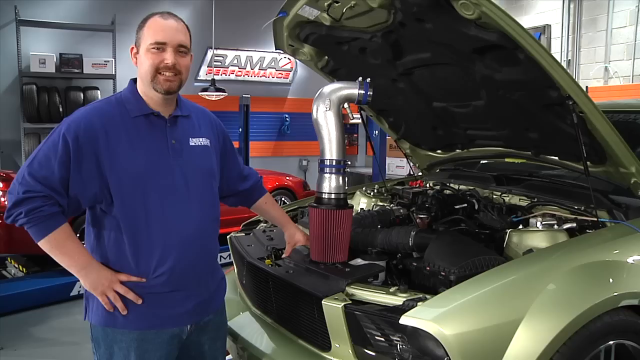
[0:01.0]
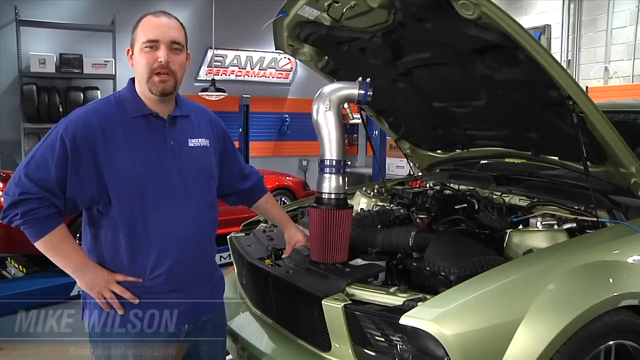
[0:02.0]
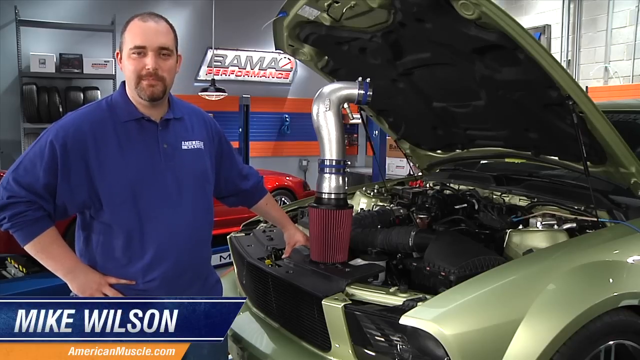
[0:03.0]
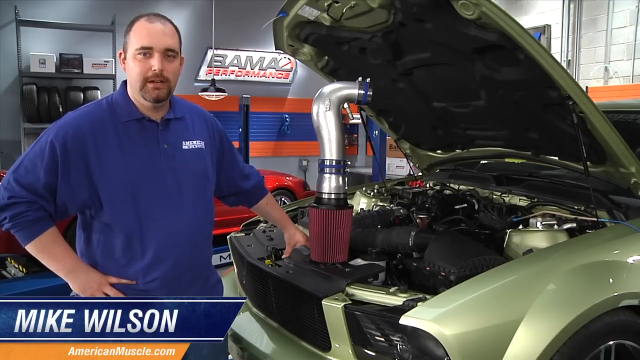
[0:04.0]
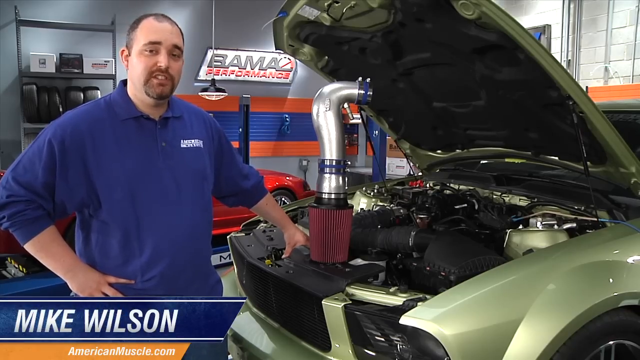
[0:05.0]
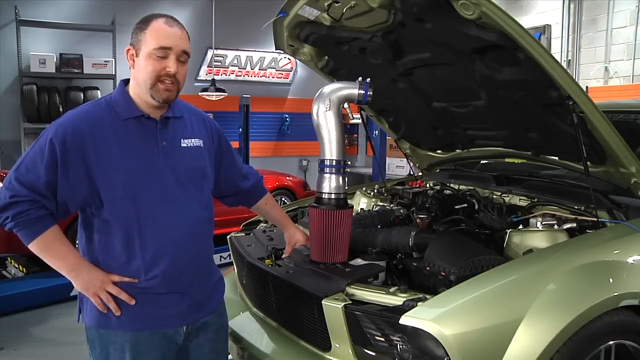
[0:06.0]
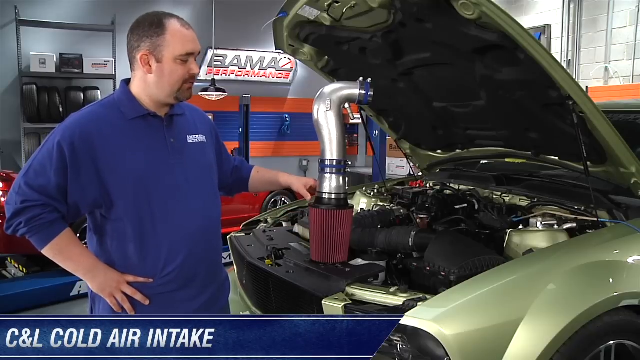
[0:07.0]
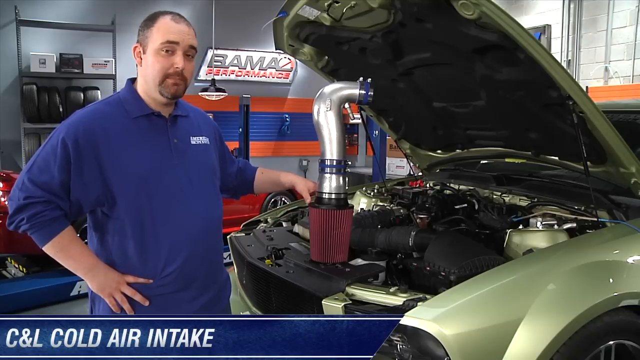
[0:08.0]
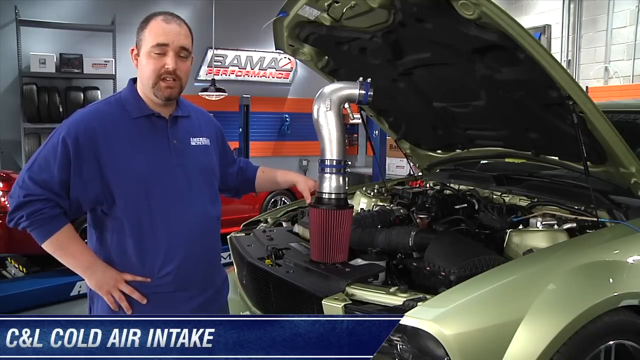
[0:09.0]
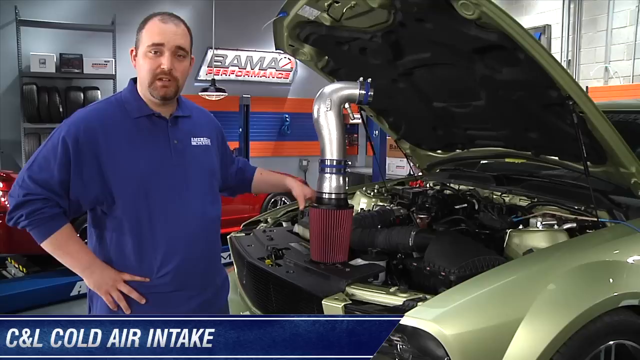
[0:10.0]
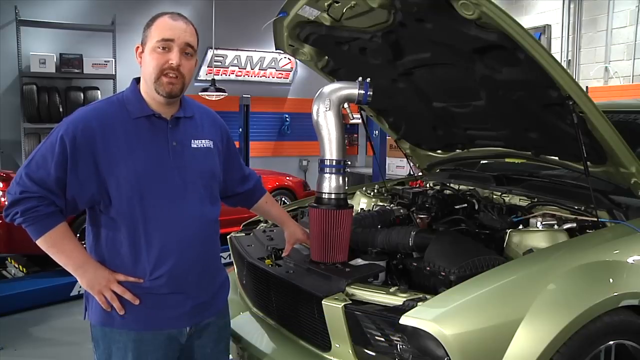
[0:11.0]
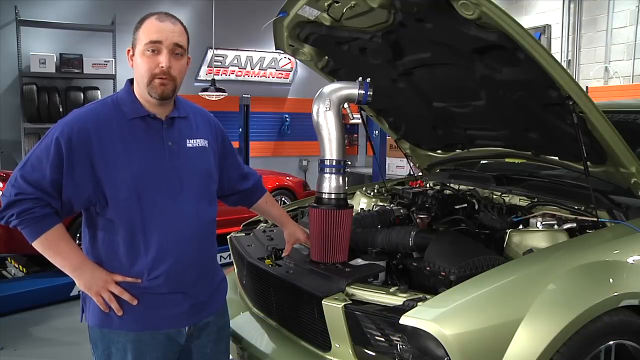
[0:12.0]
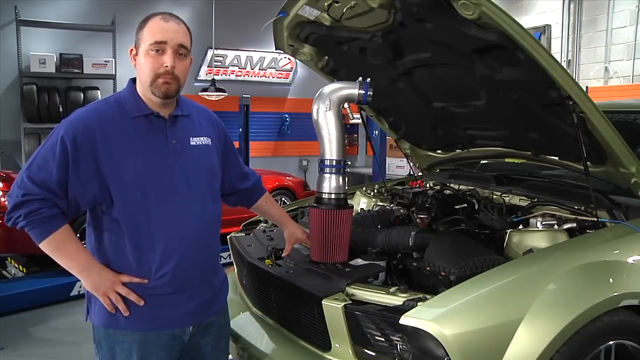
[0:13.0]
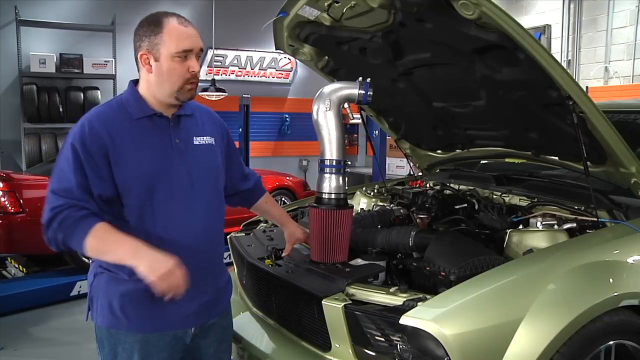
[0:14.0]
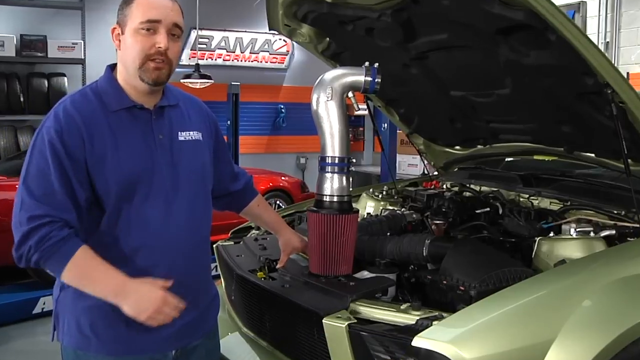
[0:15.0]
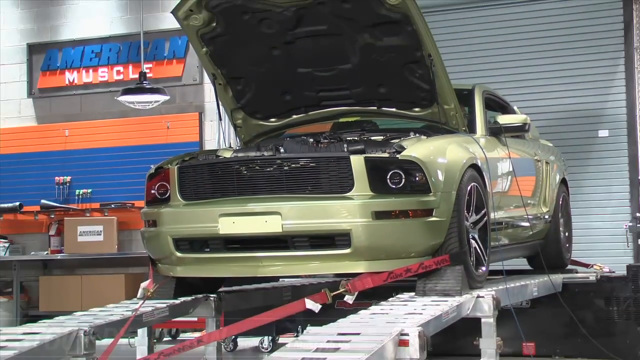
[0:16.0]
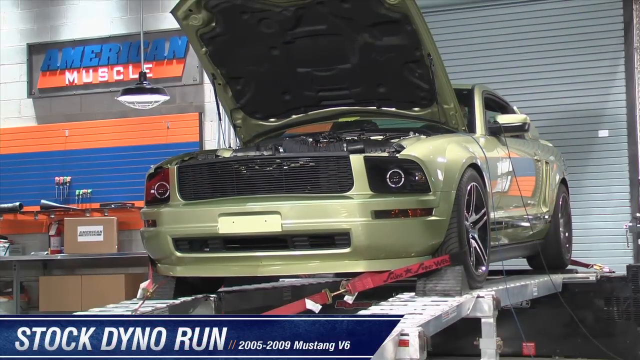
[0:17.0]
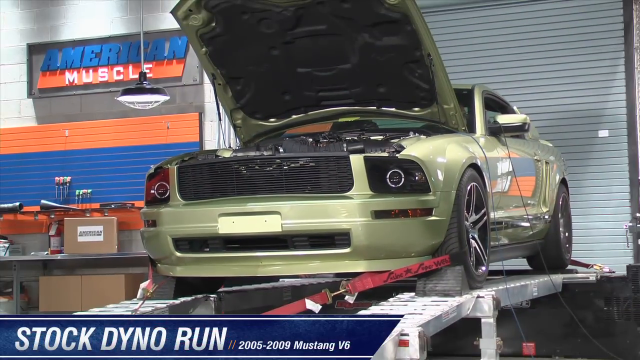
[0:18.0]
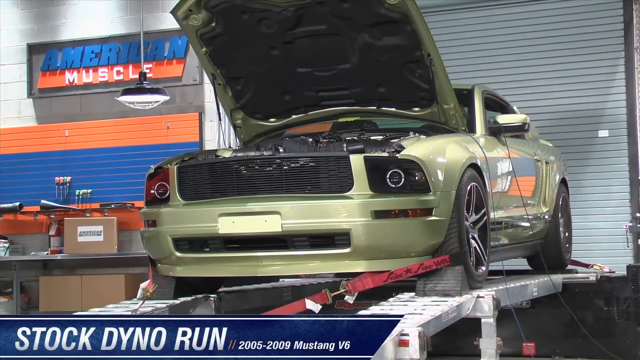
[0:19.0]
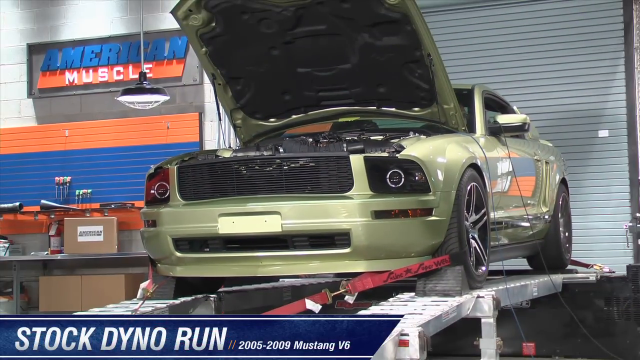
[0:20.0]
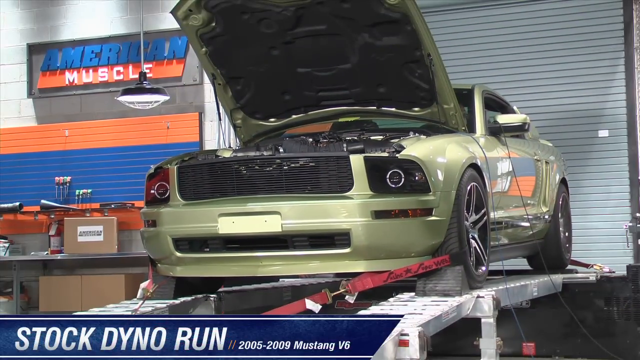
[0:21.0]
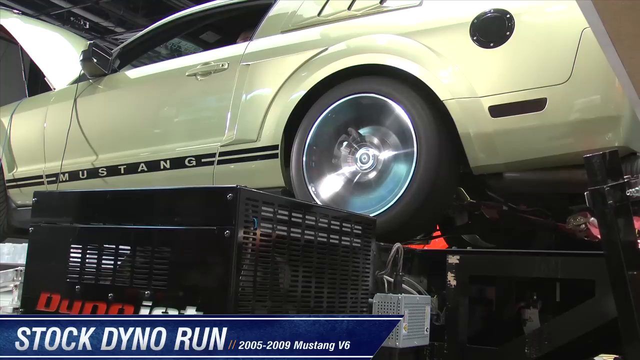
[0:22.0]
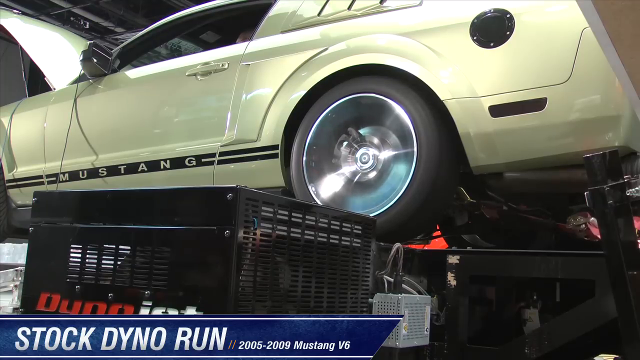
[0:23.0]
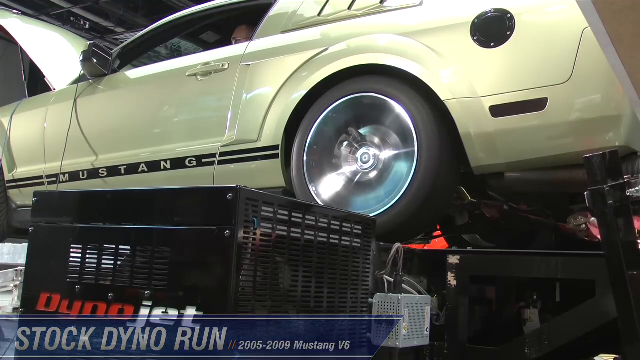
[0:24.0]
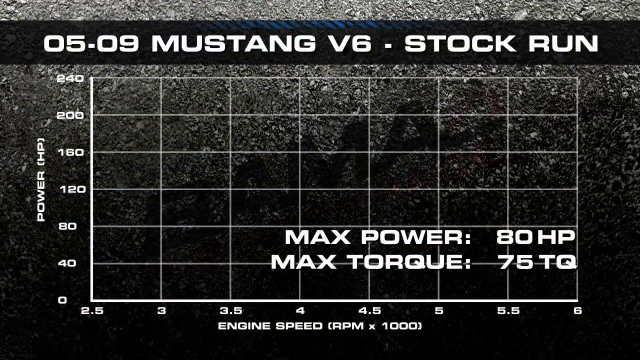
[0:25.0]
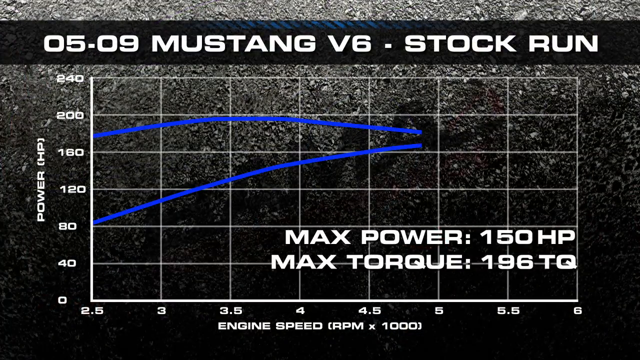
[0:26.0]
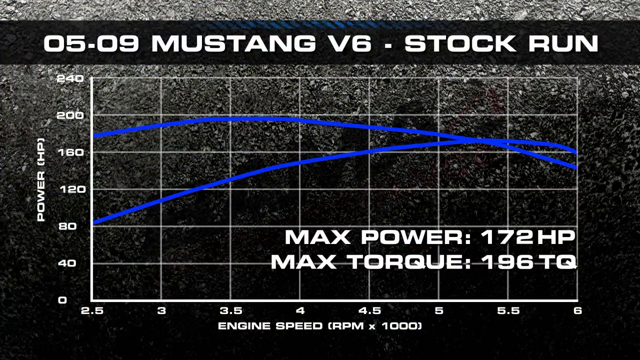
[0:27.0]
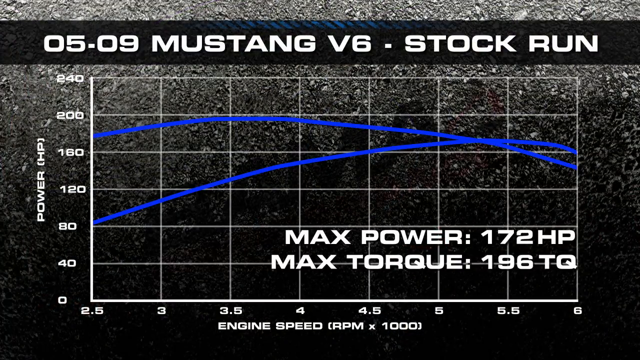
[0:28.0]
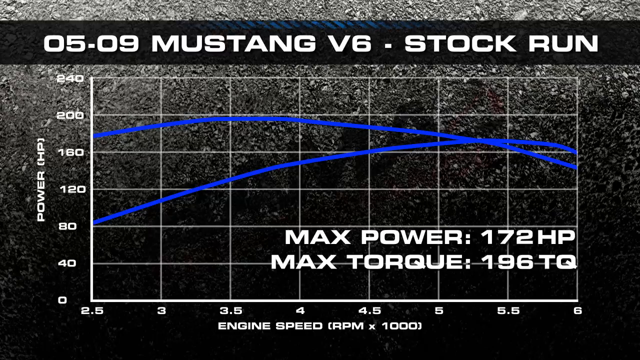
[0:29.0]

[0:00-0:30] The video starts on a black screen before switching to the inside of a garage-like setting. A single man on the left side looks directly at the camera, his right hand on his right hip and his left hand on the inside of a vehicle's engine, whose front lid is open. Behind him is a very sporty-looking setting with a sign in the background that says "Bama Performance," with "Performance" in red and "Bama" in gray. To the left of the sign is a shelf that seems to hold a bunch of black rubber tires, and below this in the background is a red vehicle. The car to the right, with its front trunk open, is a greenish mossy color. The man has a white skin tone, short black hair and a short black goatee, and wears a blue shirt. His name, "Mike Wilson," is shown at the bottom left. As he talks to the camera, his left hand moves slightly up and touches an air intake, which is gray-silverish with blue. The scene changes to a frontal view of the mossy green car the man was touching, with "Stock DYNO Run" at the bottom left. The scene then changes to the left rear of the vehicle, with the wheel spinning. Next a graph appears in a new scene; at its top it says "05-09 Mustang V6-Stock Run," and a small graphic shows the max power and max torque.